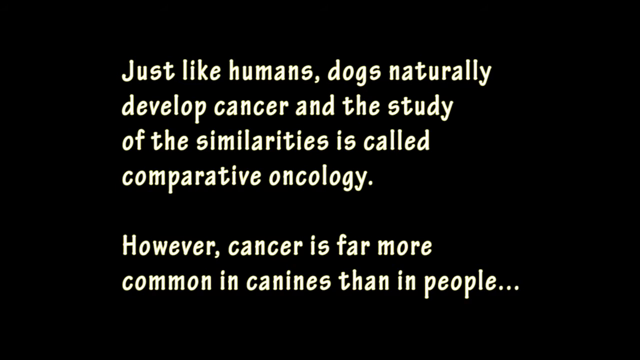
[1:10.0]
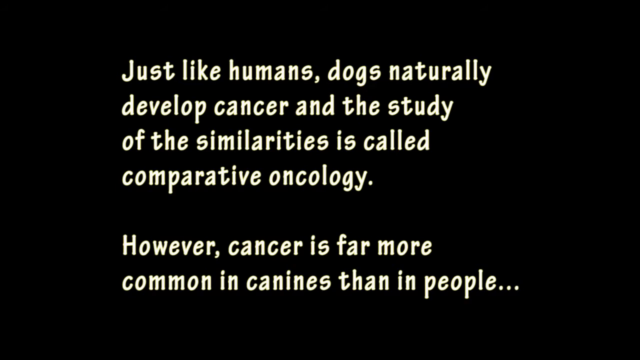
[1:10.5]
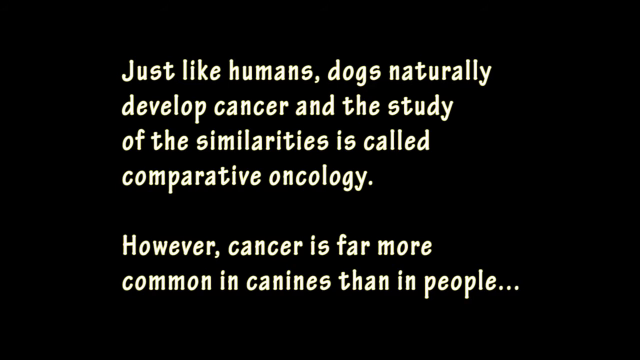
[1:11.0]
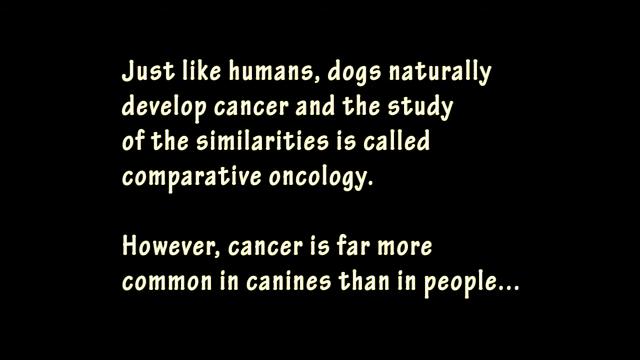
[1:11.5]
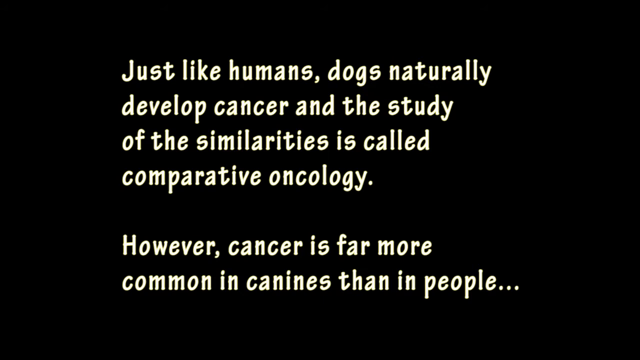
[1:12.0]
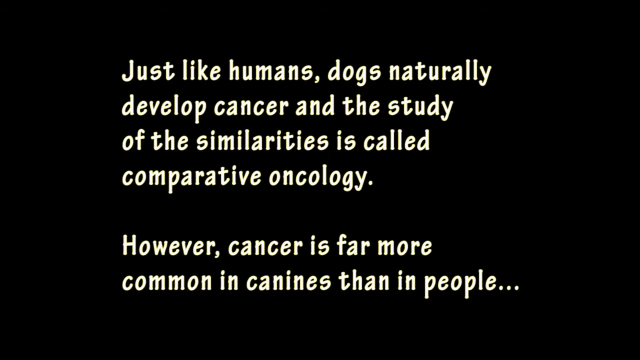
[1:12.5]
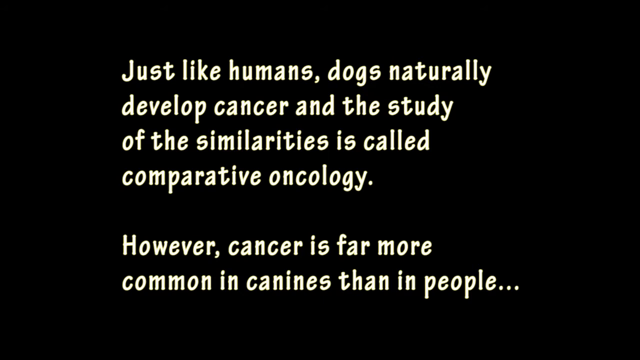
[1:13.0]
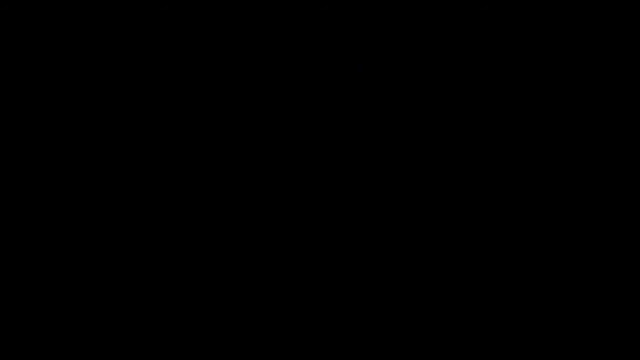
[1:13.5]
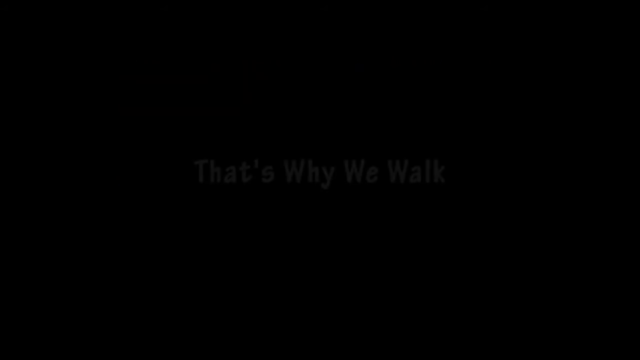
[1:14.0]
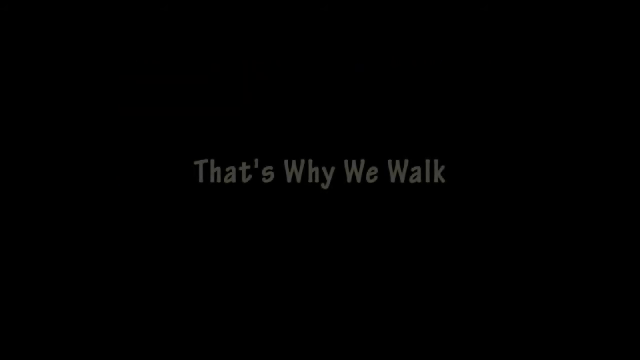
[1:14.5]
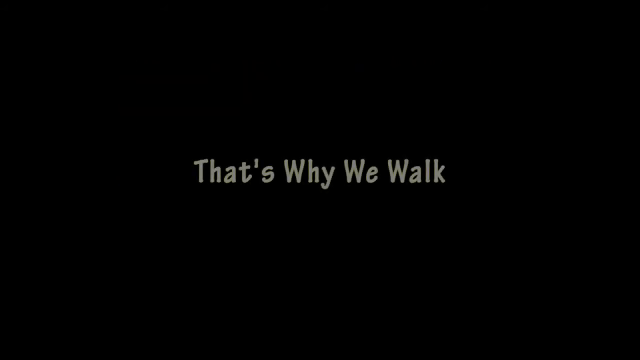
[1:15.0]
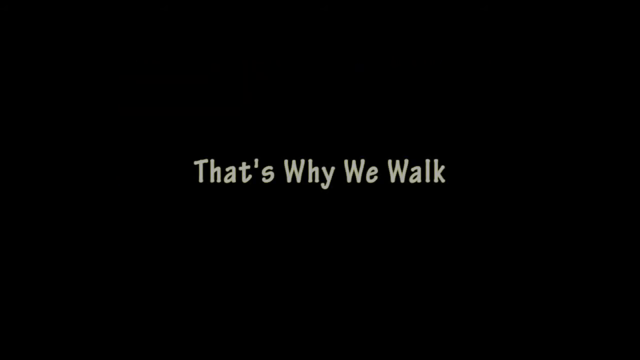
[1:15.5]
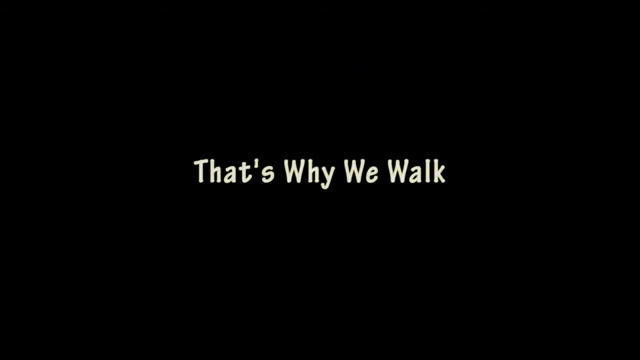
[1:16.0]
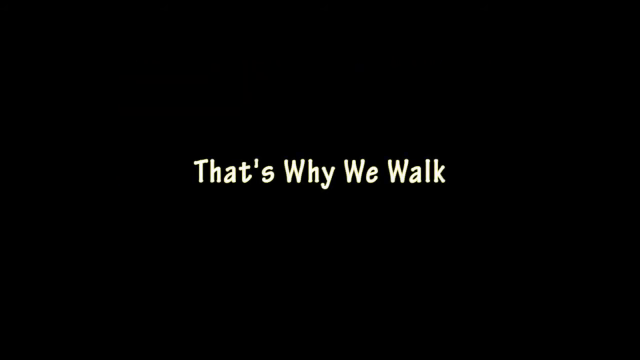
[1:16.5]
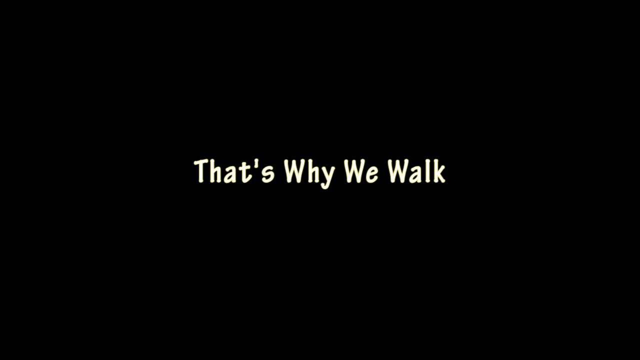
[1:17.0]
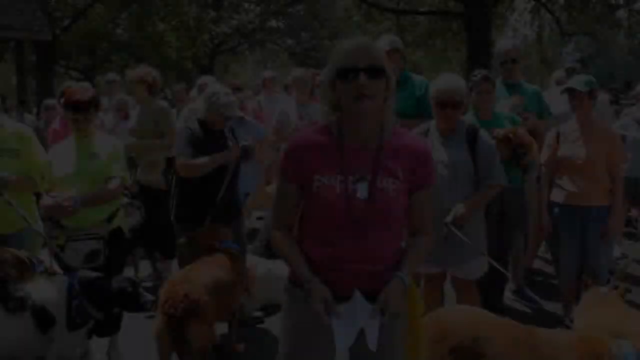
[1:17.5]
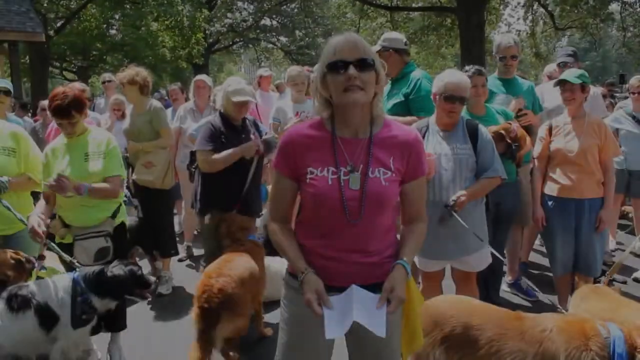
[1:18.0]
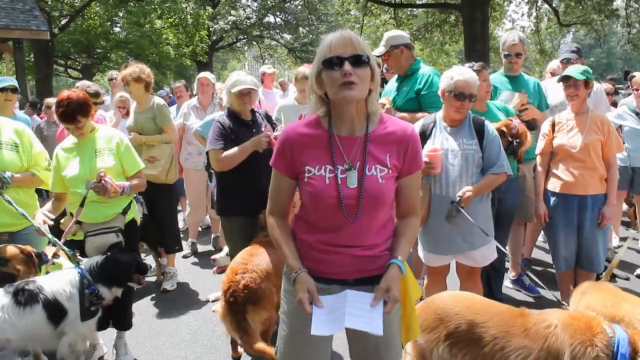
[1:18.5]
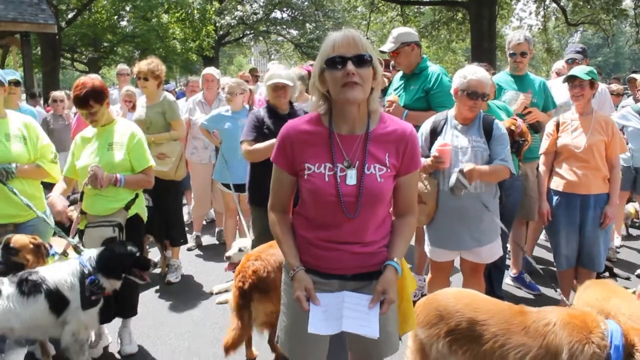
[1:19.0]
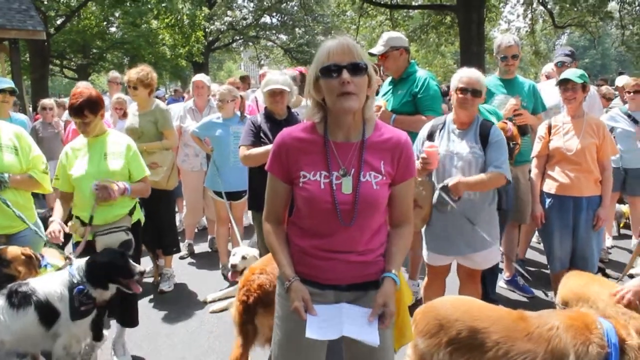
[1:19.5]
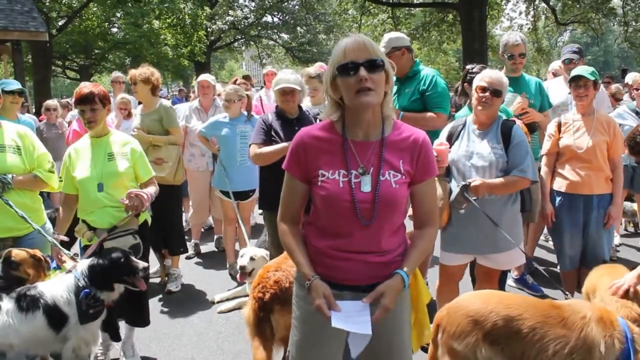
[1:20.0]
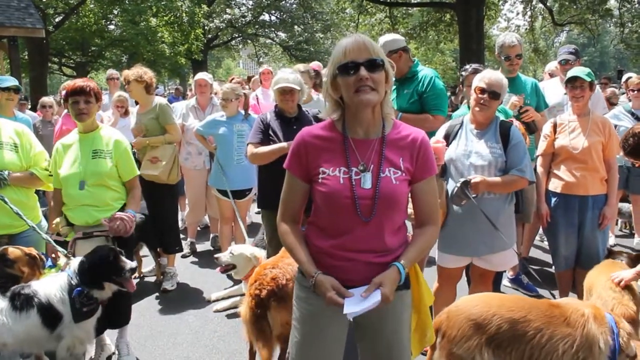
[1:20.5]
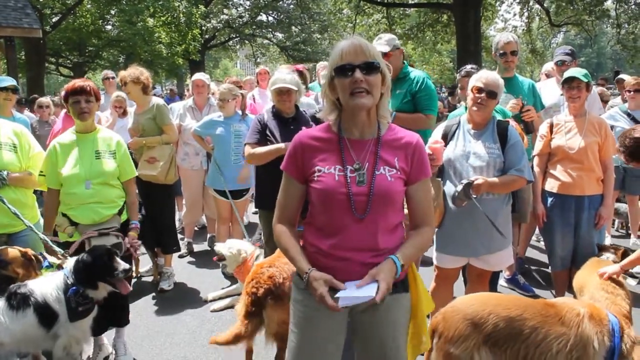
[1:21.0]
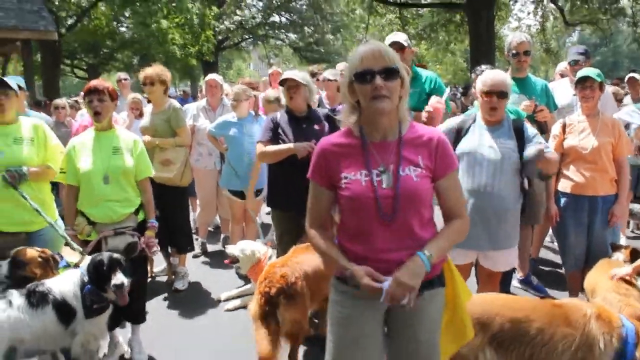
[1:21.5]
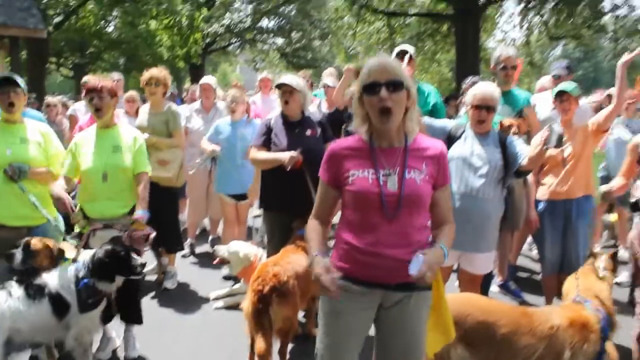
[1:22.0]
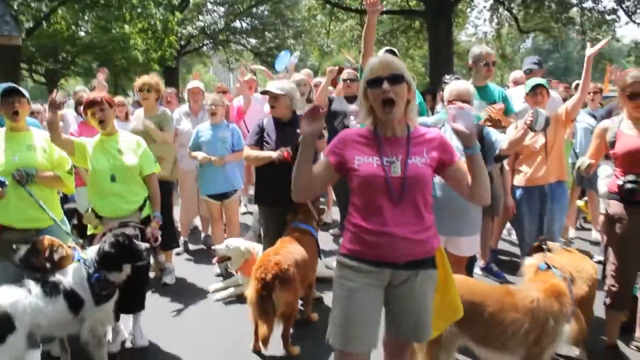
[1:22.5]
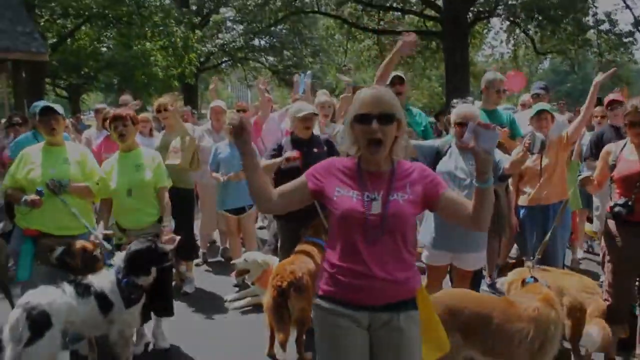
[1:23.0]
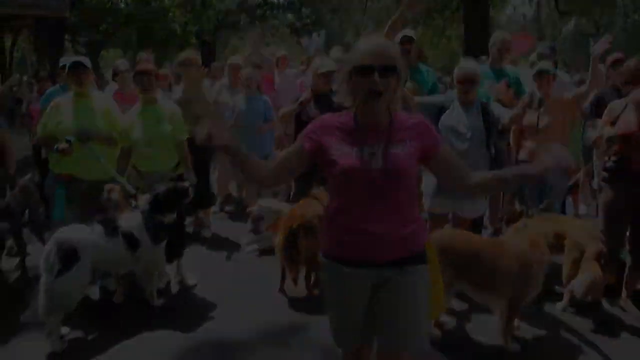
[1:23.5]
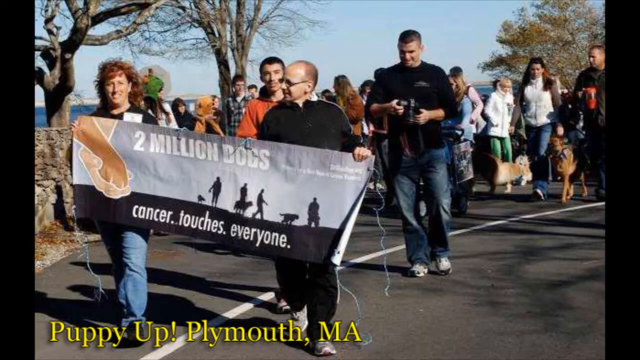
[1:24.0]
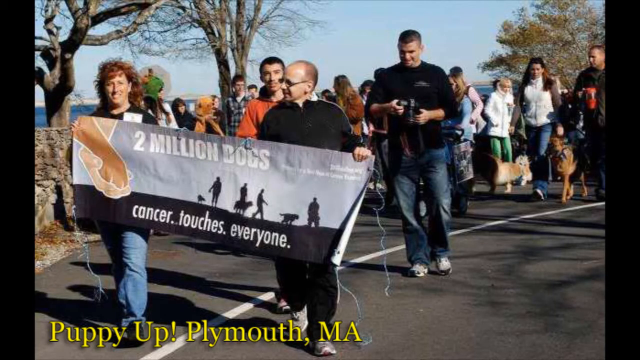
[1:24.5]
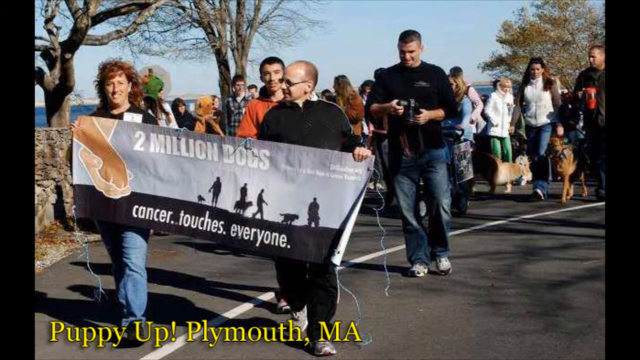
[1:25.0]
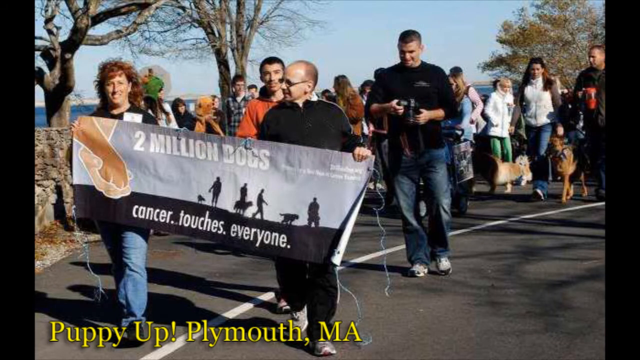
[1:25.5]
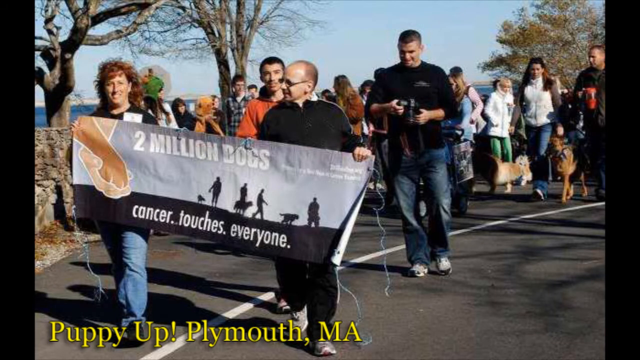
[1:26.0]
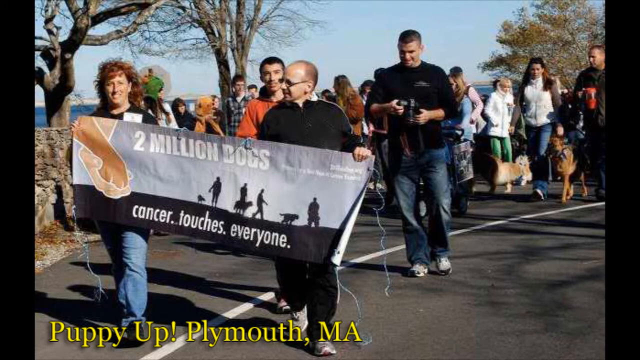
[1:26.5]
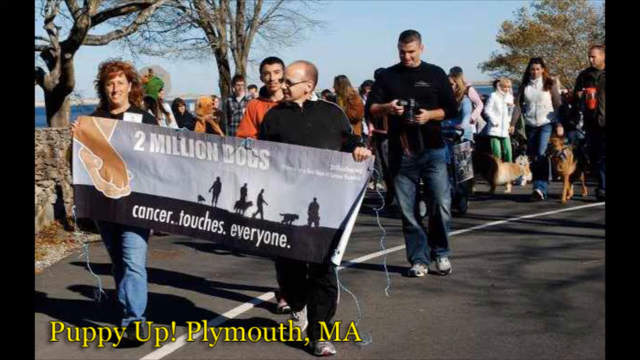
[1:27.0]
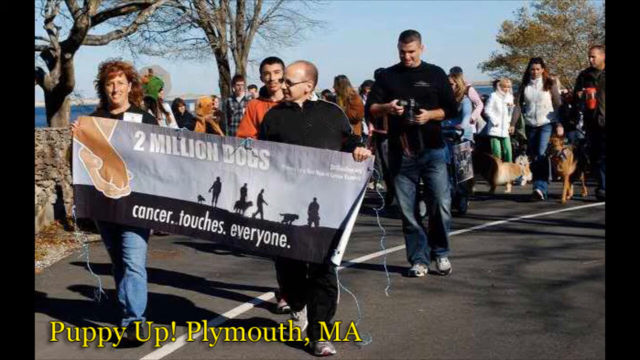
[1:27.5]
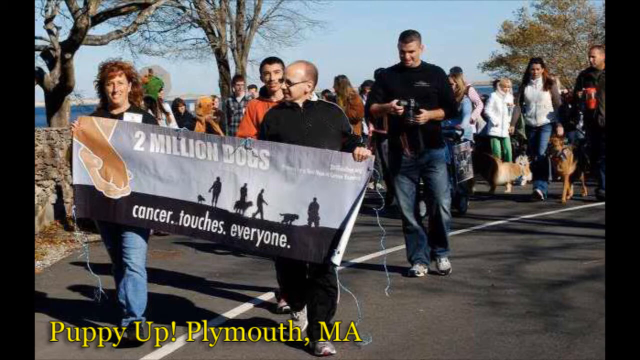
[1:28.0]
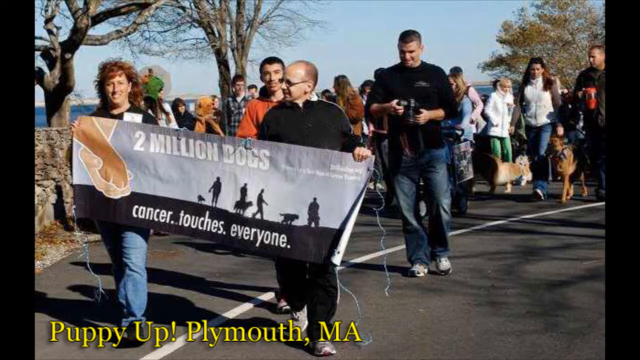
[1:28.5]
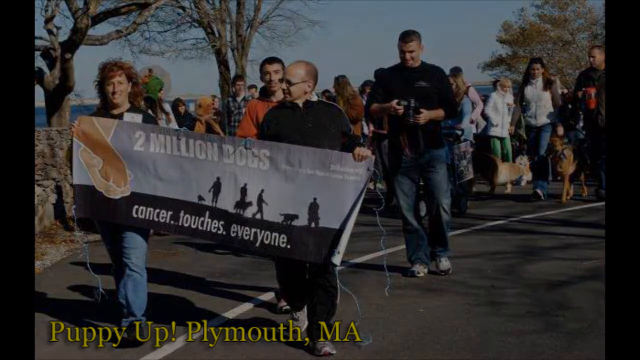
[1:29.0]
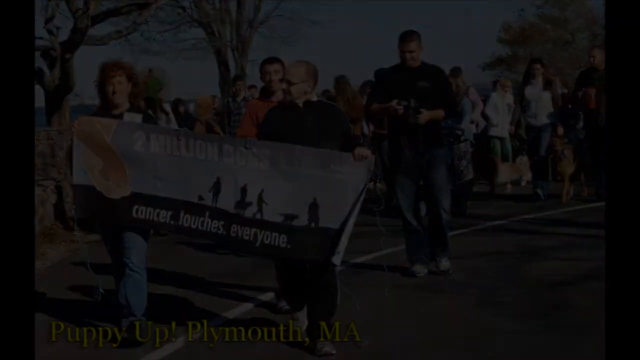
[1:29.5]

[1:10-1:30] Text reads "cancer touches everyone", followed by the statement that just like humans, dogs naturally develop cancer, that the study of the similarities is called comparative oncology, and that cancer is far more common in canines than in people. Dogs are in the sun while people talk as they hold them. The video then states "cancer is the greatest global killer".